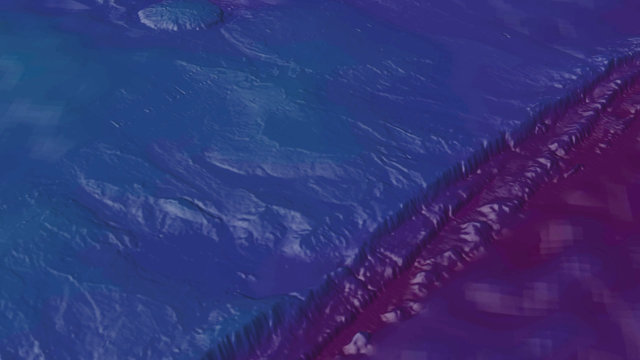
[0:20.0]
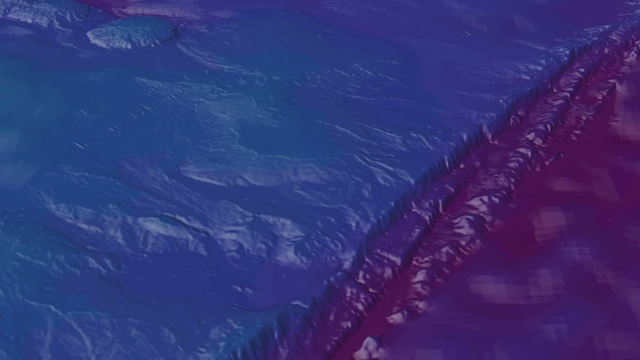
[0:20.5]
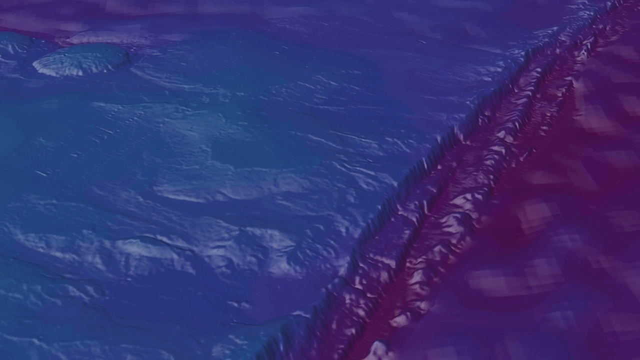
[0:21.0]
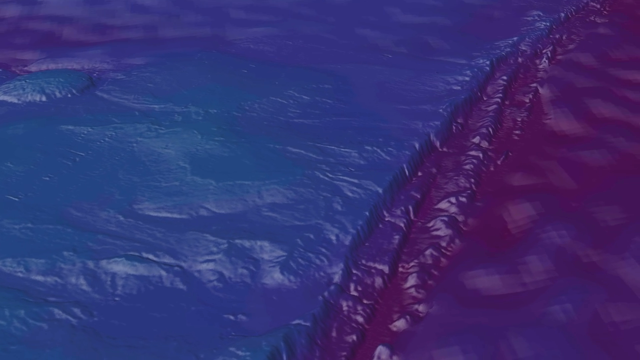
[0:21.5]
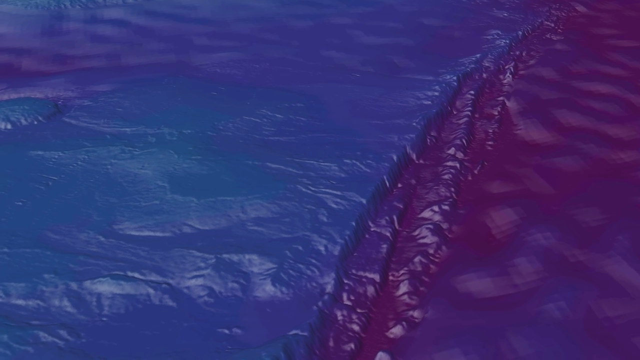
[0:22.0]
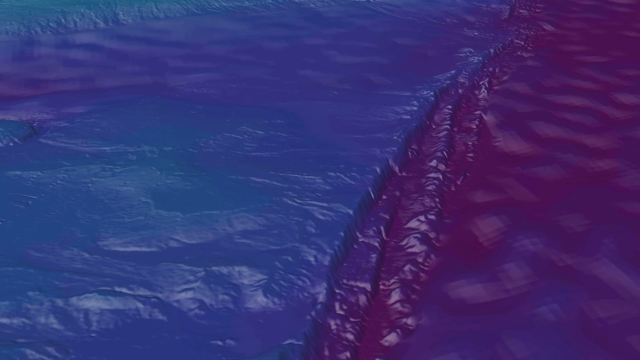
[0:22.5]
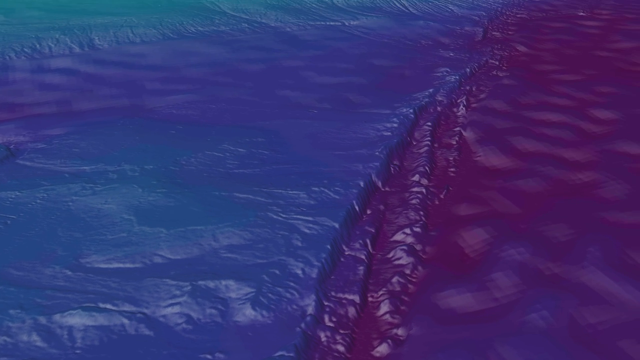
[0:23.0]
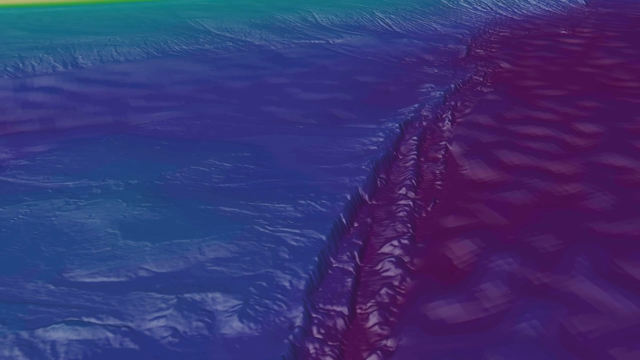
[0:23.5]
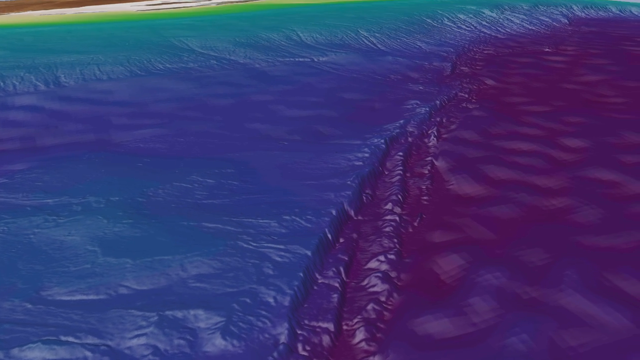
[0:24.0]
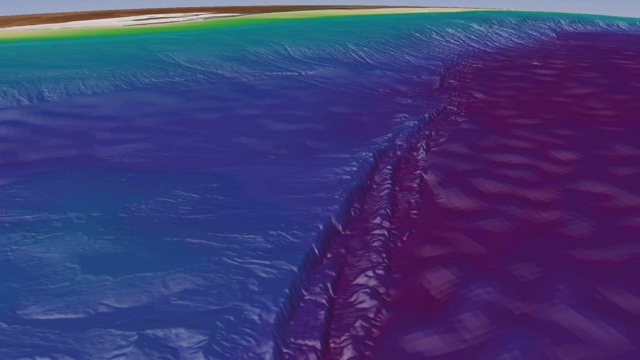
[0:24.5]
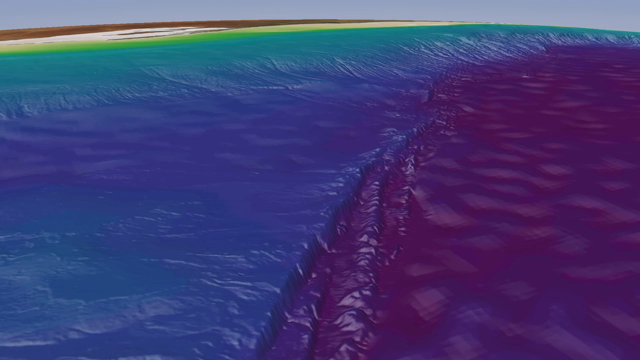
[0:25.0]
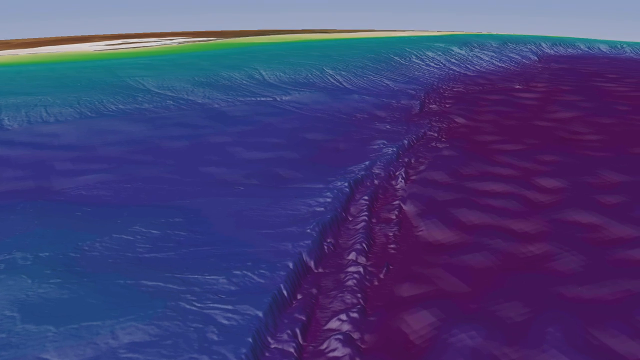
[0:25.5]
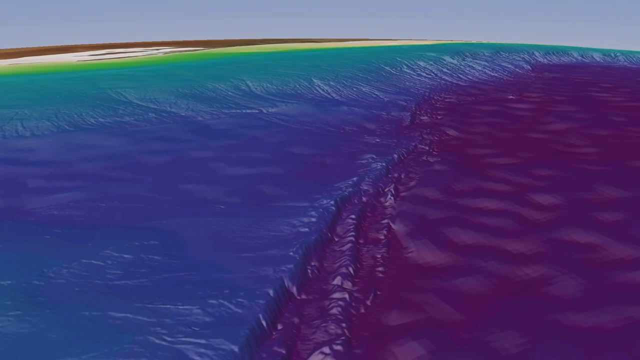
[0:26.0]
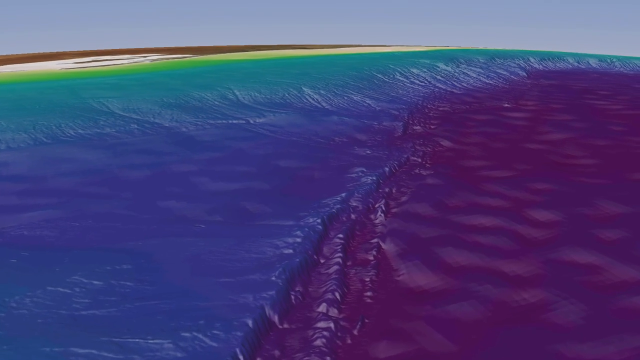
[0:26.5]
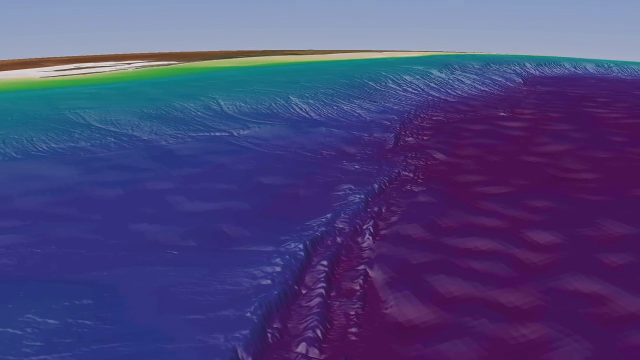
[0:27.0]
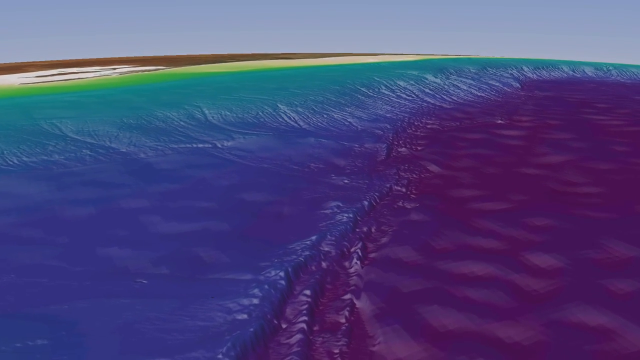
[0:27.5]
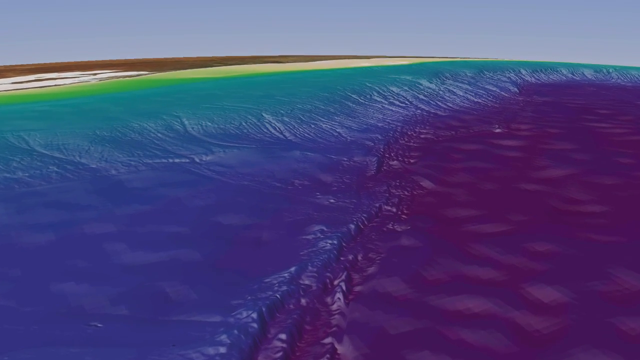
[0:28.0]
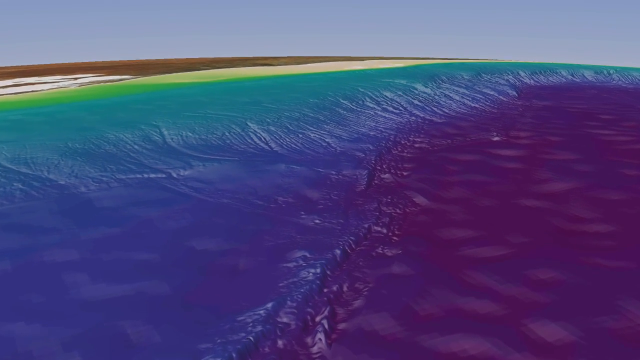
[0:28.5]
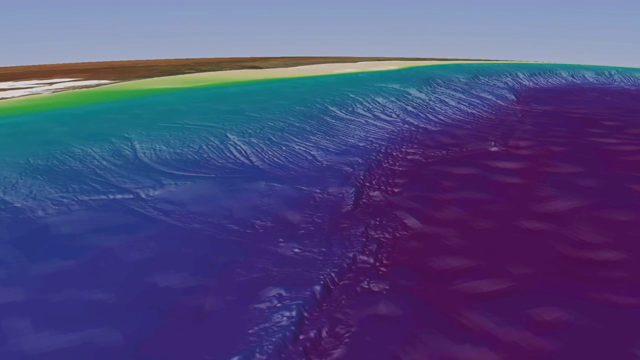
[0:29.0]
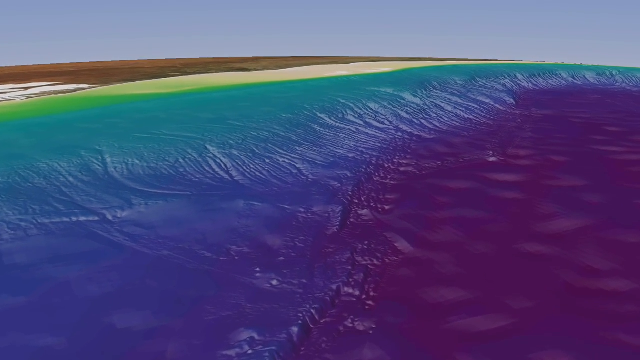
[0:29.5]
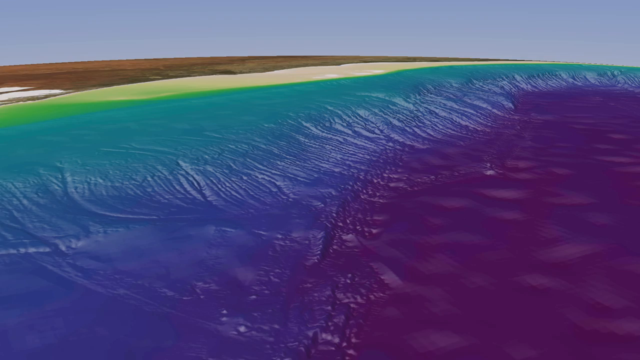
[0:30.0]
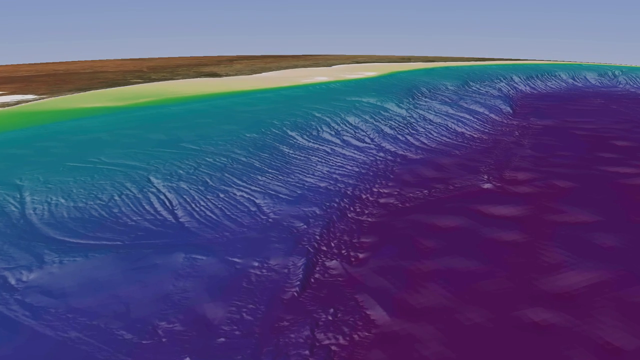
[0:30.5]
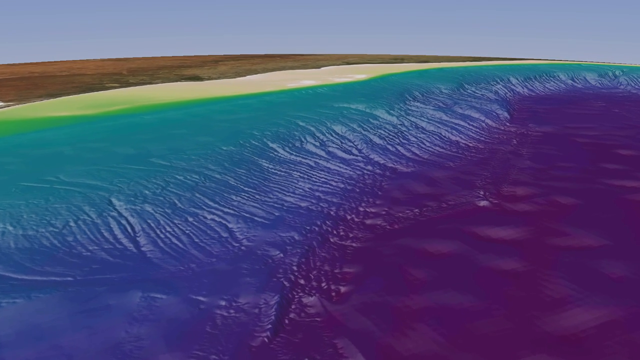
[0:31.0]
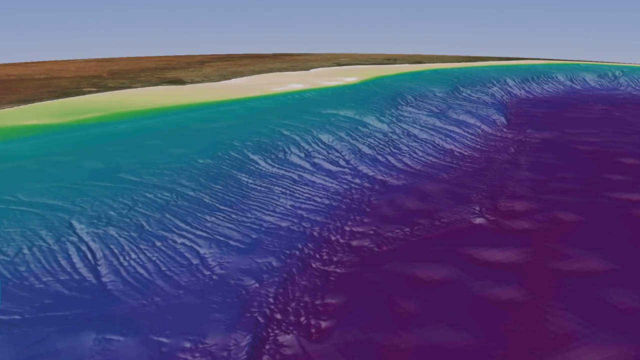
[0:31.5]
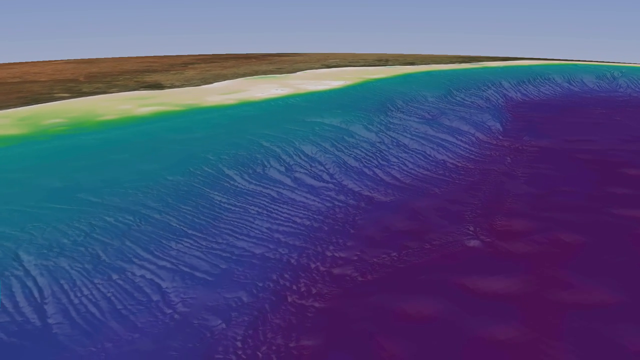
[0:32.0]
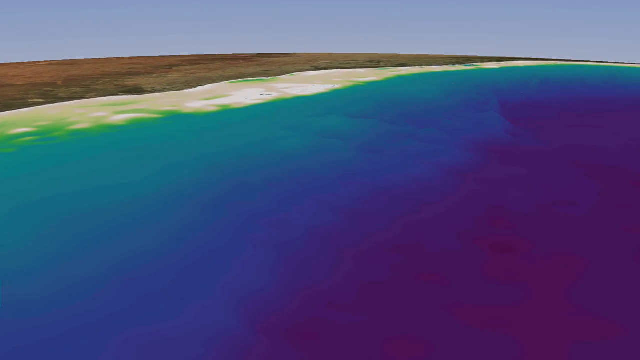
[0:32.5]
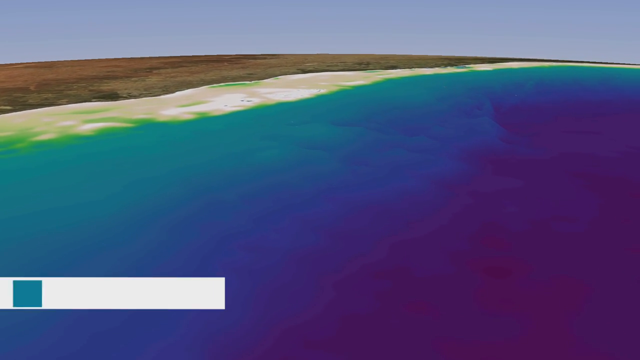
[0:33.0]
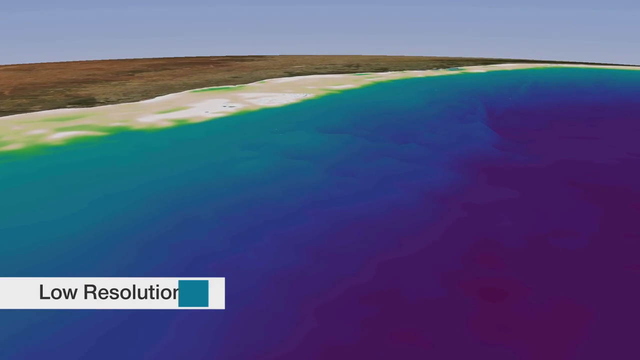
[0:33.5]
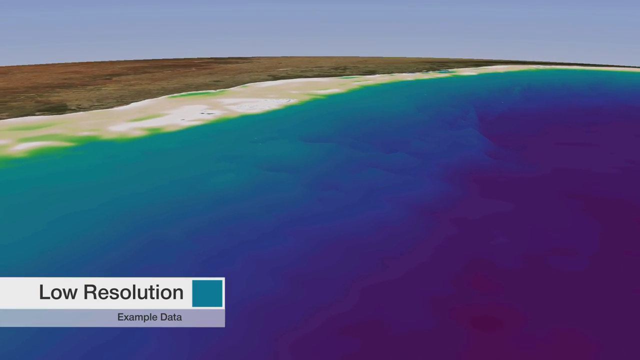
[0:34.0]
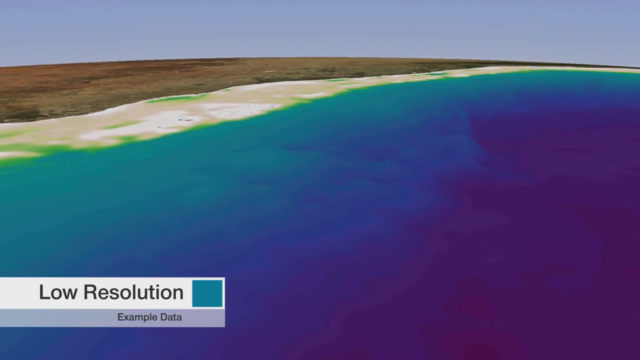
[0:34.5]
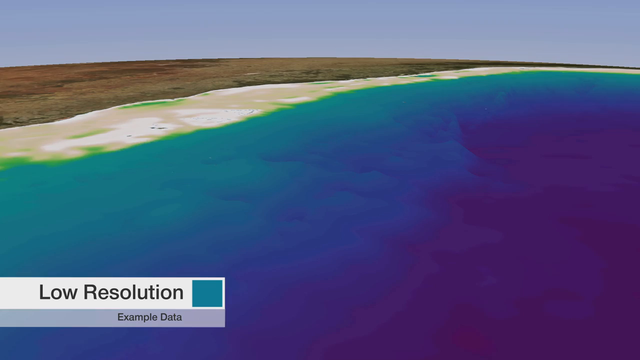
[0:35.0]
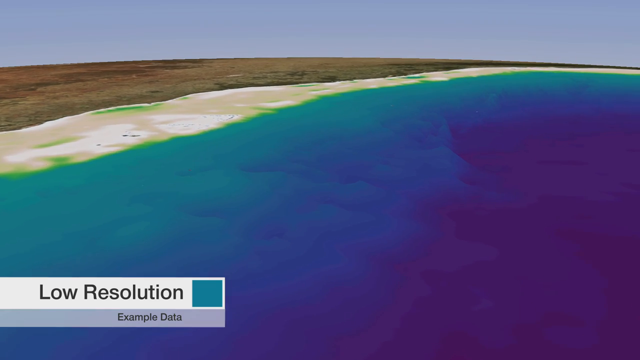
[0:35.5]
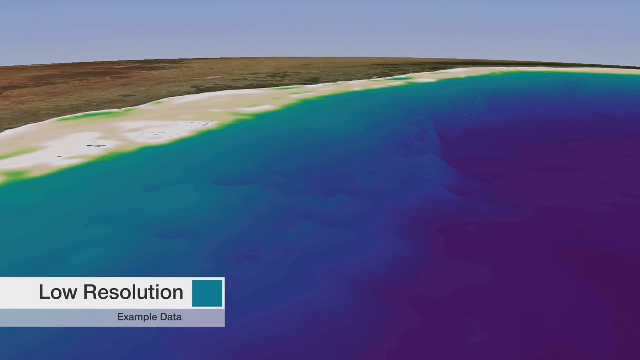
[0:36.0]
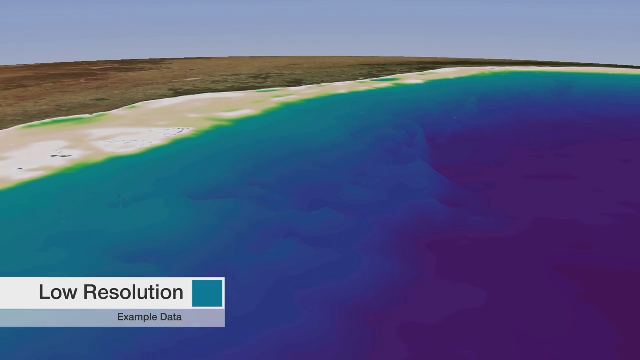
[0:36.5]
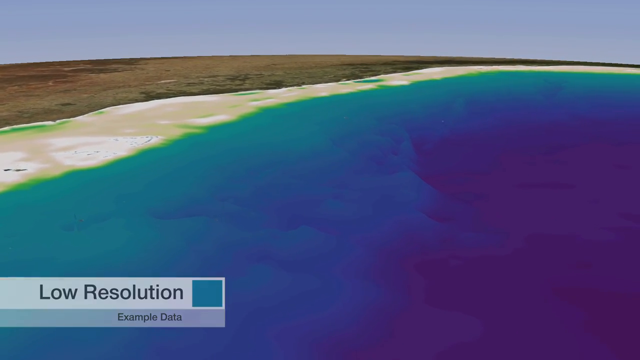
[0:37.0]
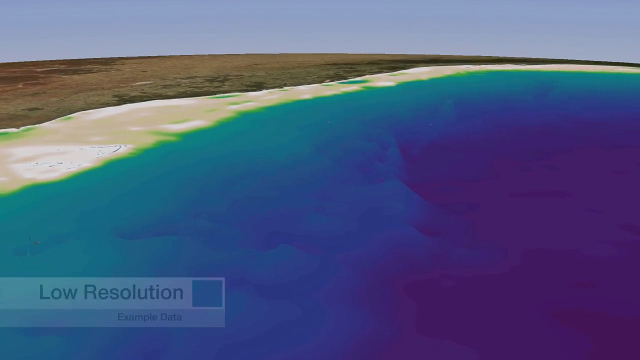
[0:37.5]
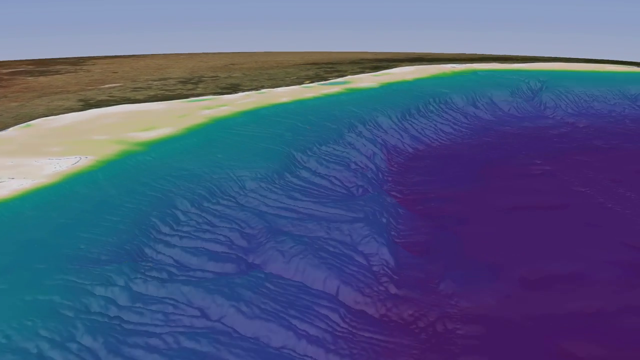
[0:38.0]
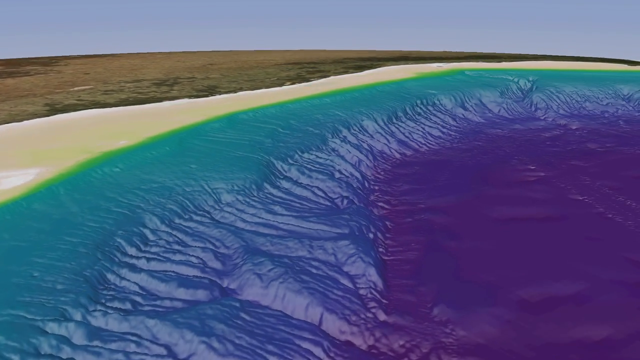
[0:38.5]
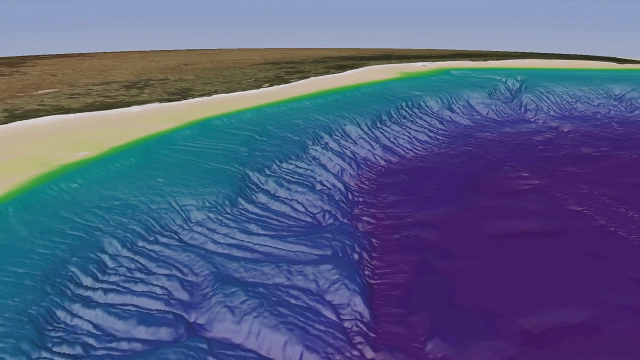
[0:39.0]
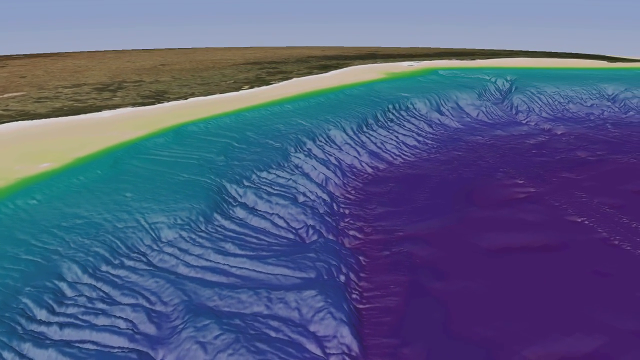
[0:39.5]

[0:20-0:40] A landmass appears in a lot of blue and purple while the camera seems to rotate. It is unclear whether the surface is ice. Green, yellow and brown coloring also appears, all somewhat intermixing. Text reads "low resolution." The texture of the landmass is visible, and green toward the edge blends somewhat into the blue. The area is possibly Australia, with the colors perhaps representing depth or temperature.